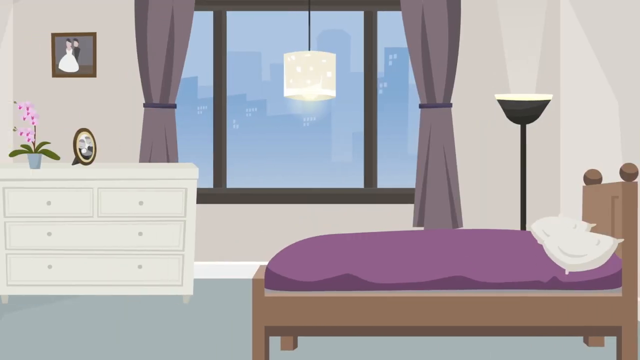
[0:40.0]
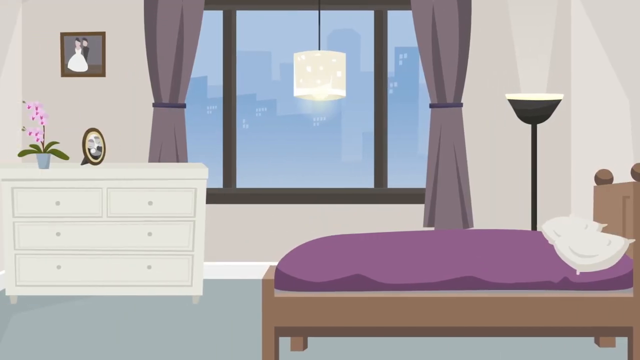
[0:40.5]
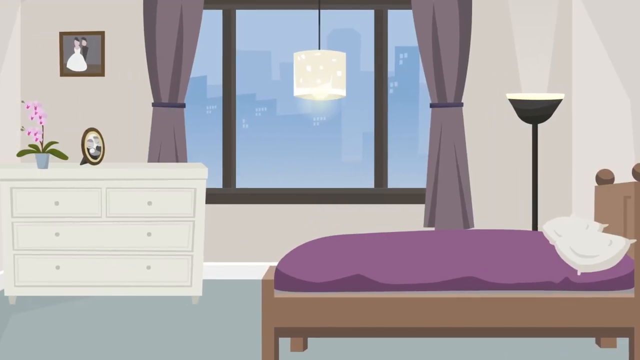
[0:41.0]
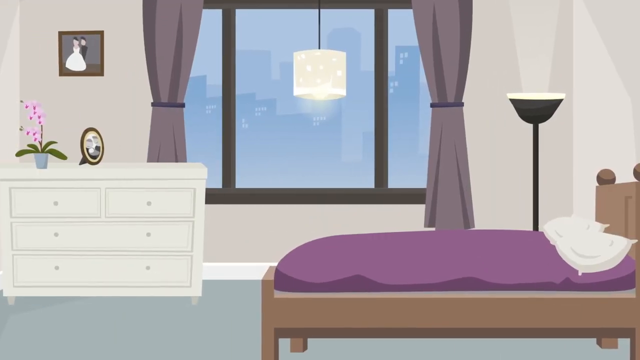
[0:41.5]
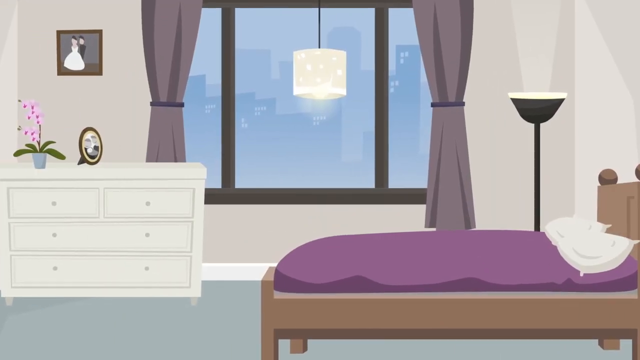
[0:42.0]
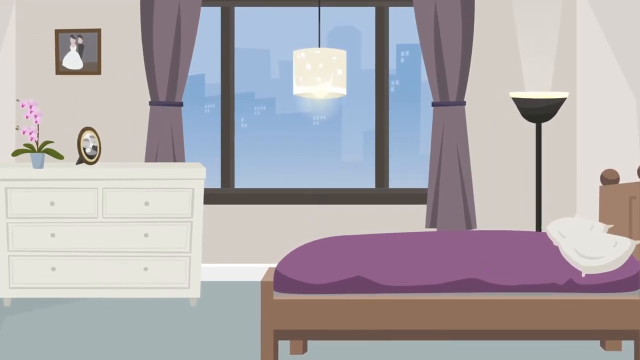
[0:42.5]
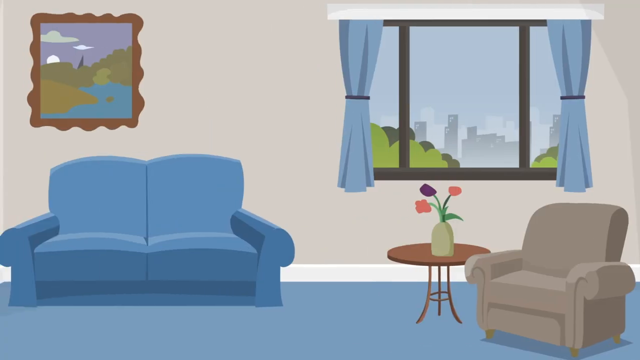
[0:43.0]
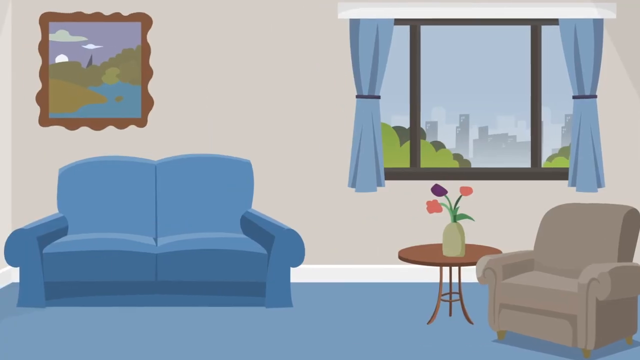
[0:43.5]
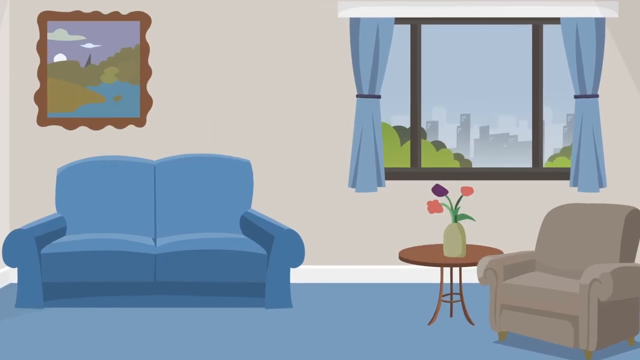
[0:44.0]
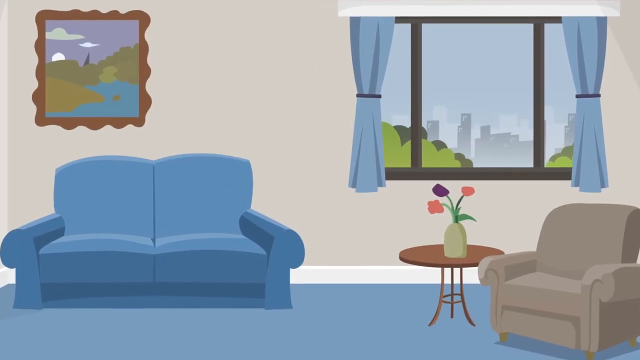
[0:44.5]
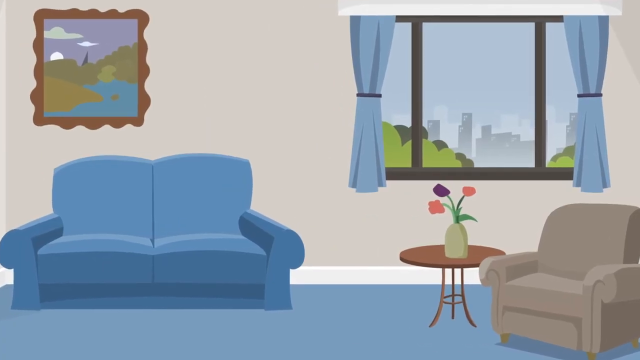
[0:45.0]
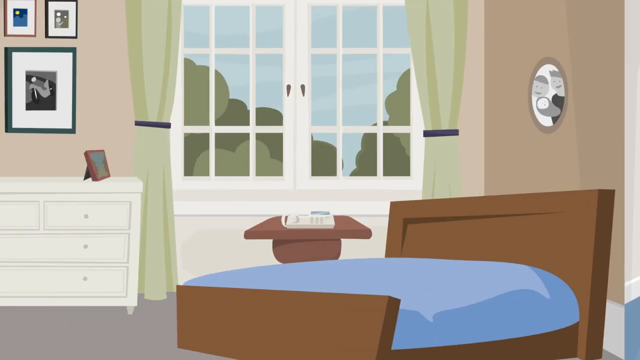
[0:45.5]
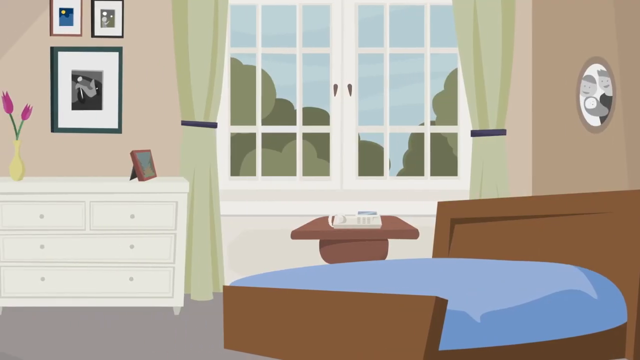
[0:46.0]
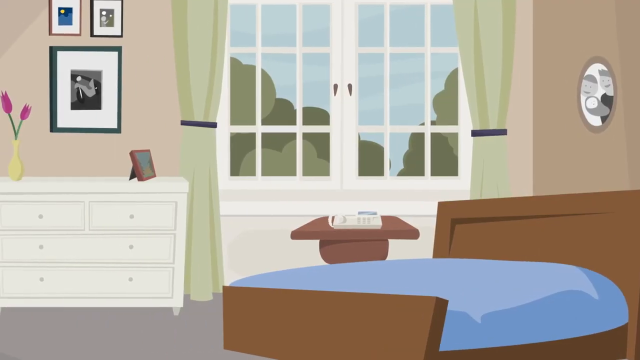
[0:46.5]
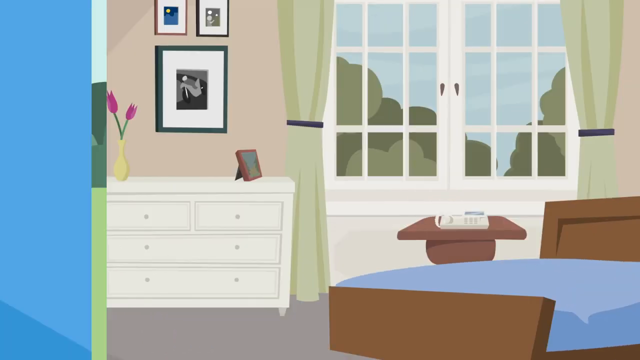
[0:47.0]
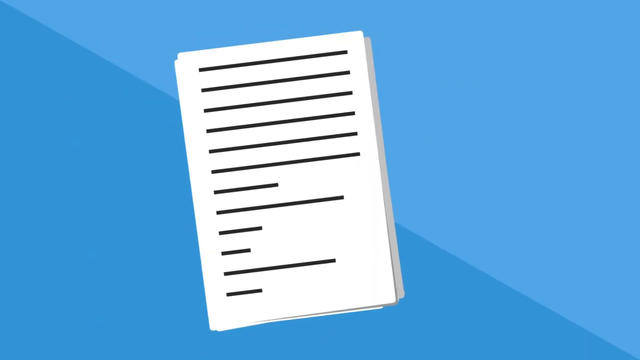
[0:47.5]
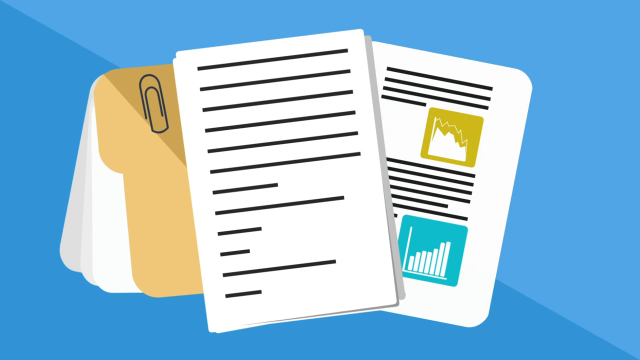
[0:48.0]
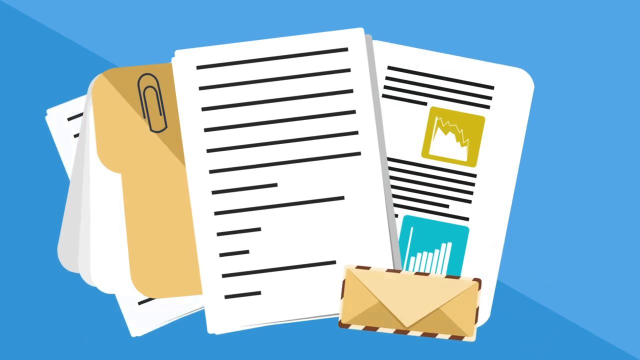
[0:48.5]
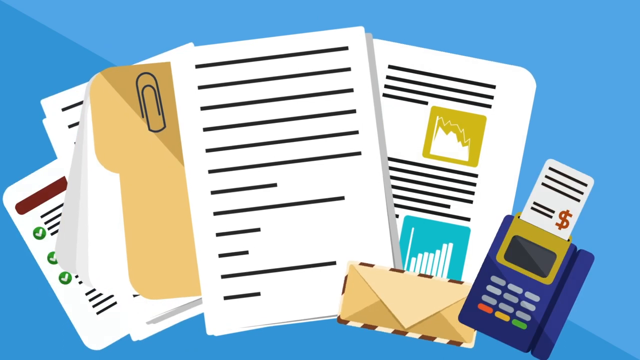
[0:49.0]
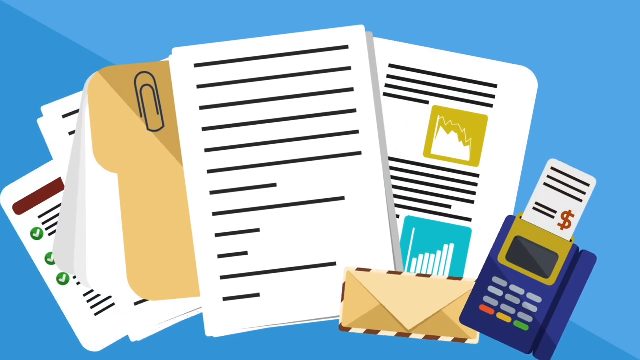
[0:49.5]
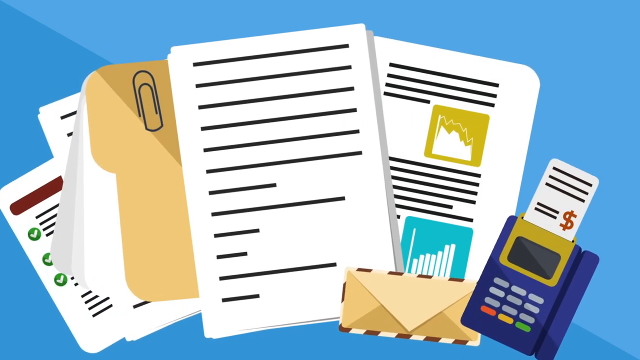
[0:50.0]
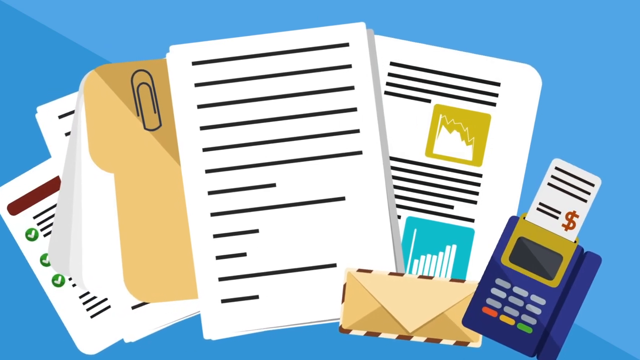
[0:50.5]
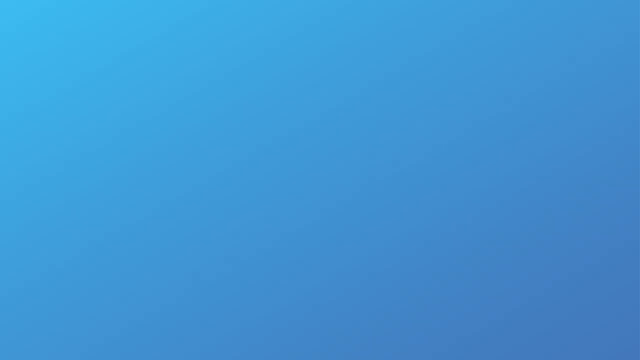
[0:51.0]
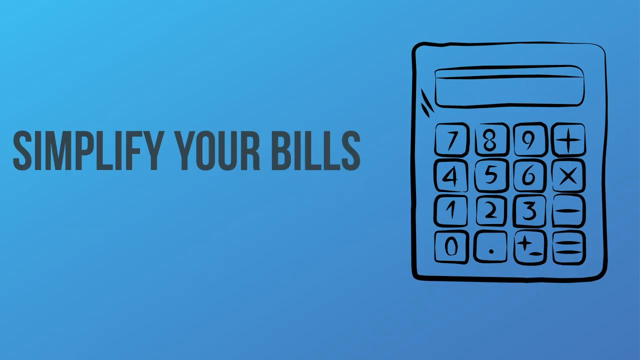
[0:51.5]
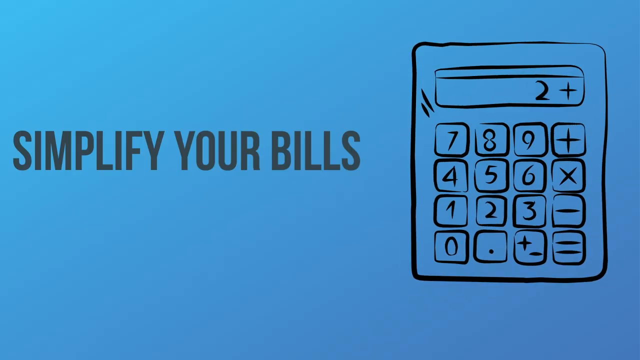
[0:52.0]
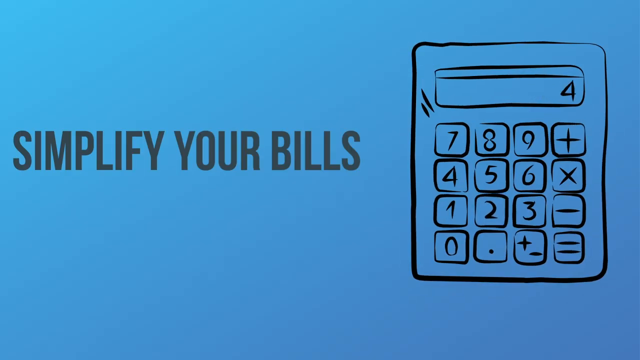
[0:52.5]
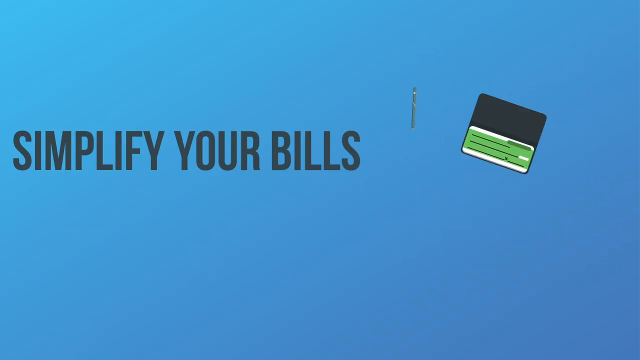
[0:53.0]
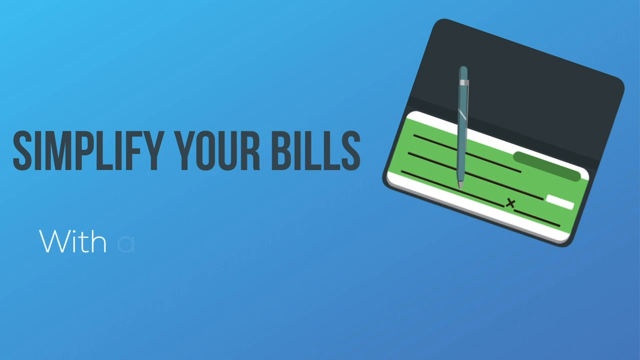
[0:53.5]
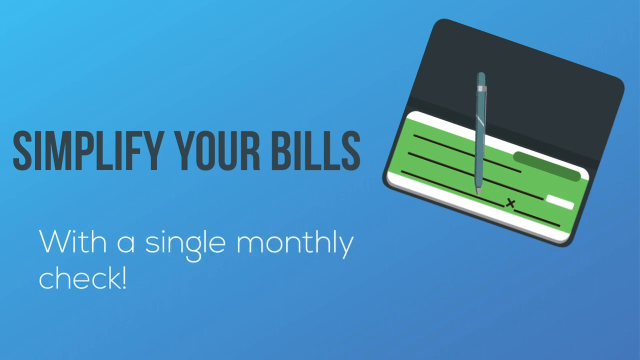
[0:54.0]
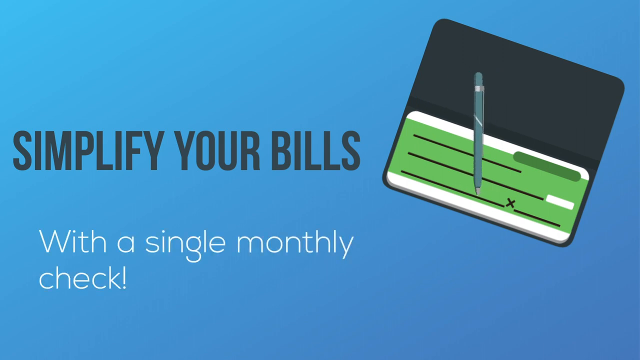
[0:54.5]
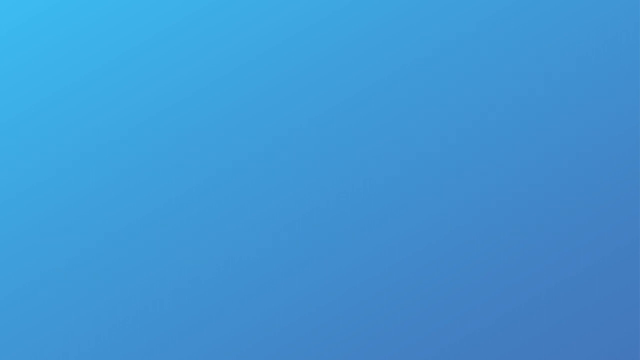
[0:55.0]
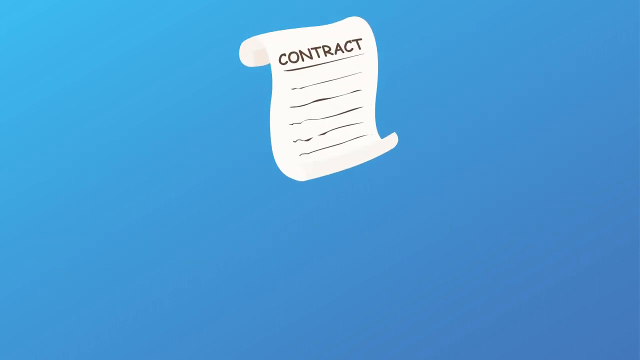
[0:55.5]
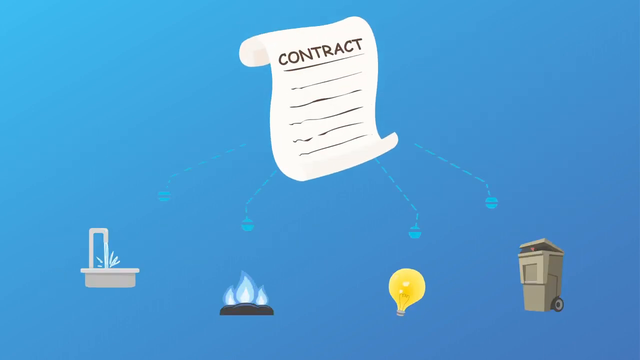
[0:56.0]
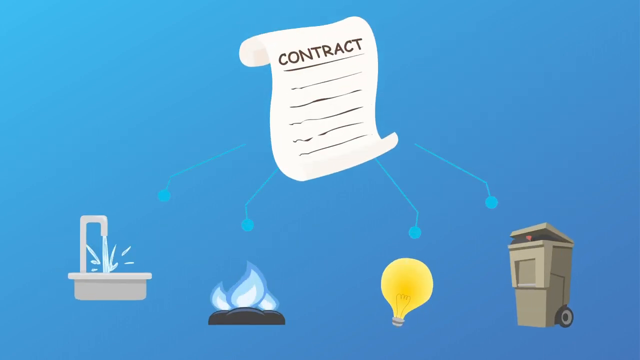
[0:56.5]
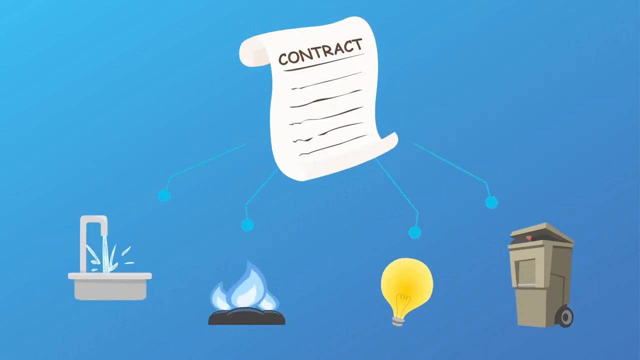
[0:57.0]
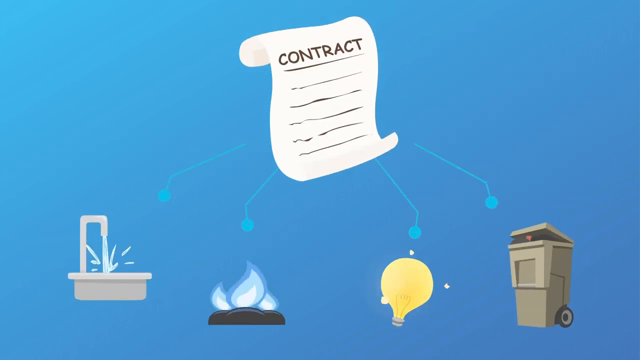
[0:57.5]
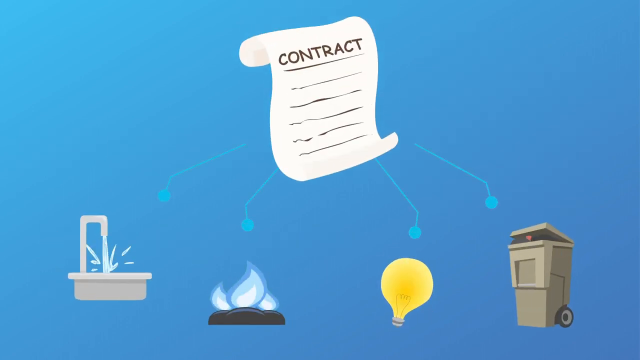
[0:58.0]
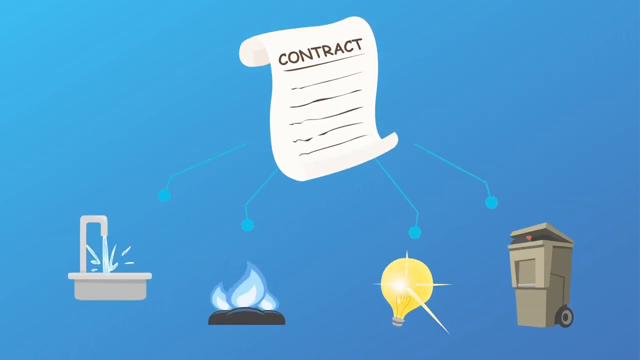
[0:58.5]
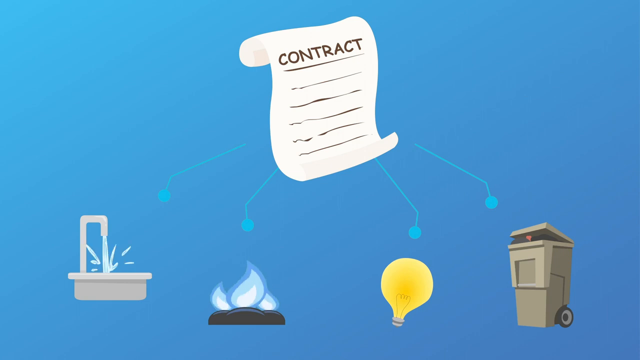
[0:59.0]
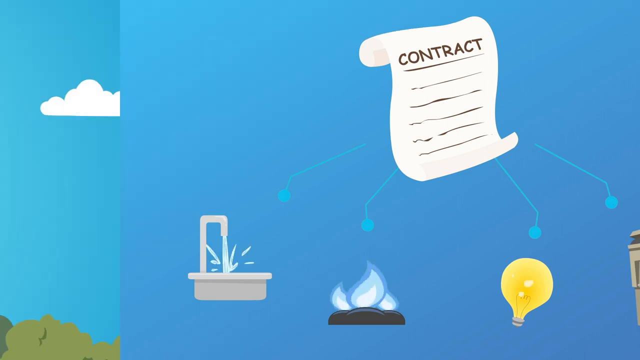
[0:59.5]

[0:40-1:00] A bedroom in a city setting is shown, with a white chest of drawers, a purple bed sheet on a wooden bed, a lamp, and a few ornaments such as two picture frames and a flower pot on the chest of drawers. The view changes to other rooms, a living room and then a bedroom, followed by an animation of lots of documents, calculators and other things that signify bills, payments and receipts. The next screen has a blue background with the text "simplify your bills" and an animated calculator to the right of it, then more text pops up underneath reading "with a monthly Check." Finally, an image shows the contract with lots of lines protruding from it to other images such as a lightbulb, a gas burner, a bathtub and a waste bin, signifying what the contract signs you up for.